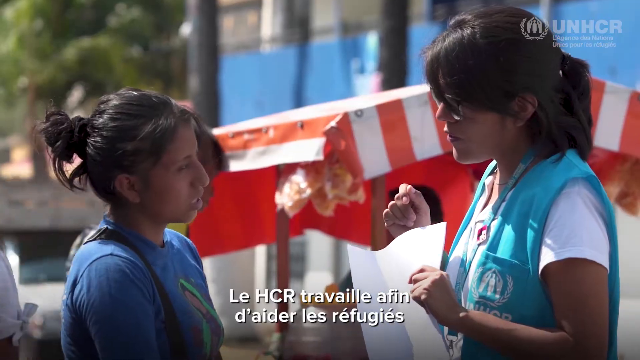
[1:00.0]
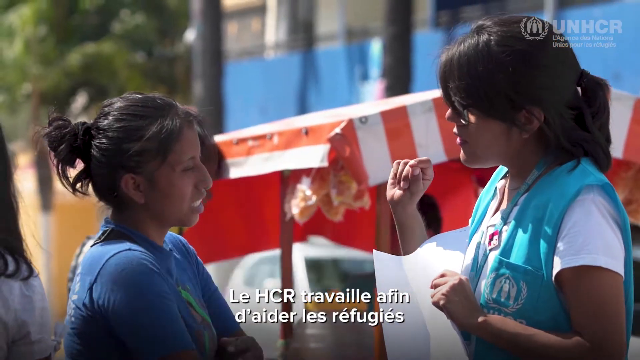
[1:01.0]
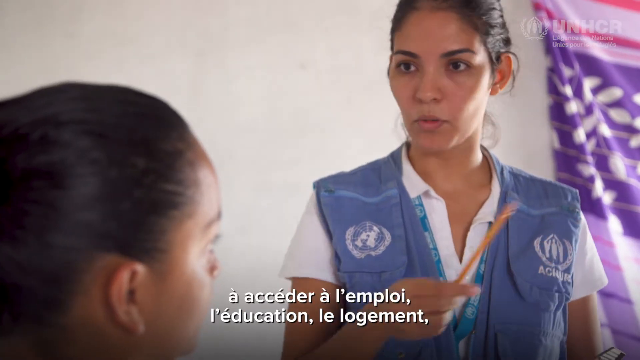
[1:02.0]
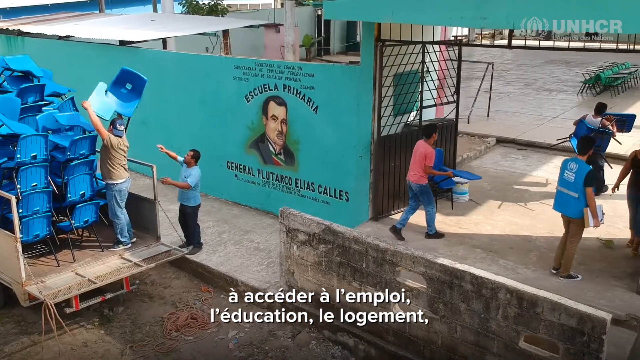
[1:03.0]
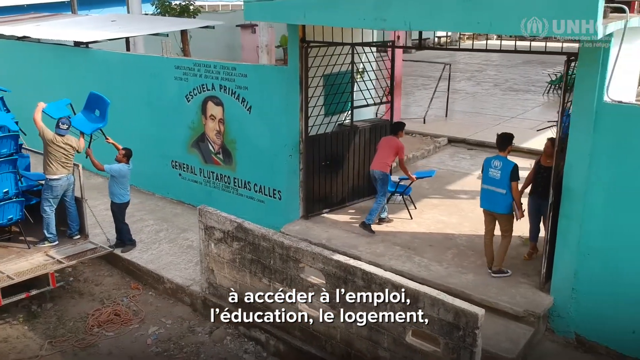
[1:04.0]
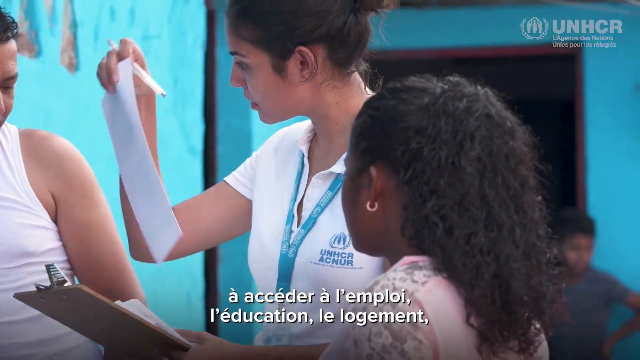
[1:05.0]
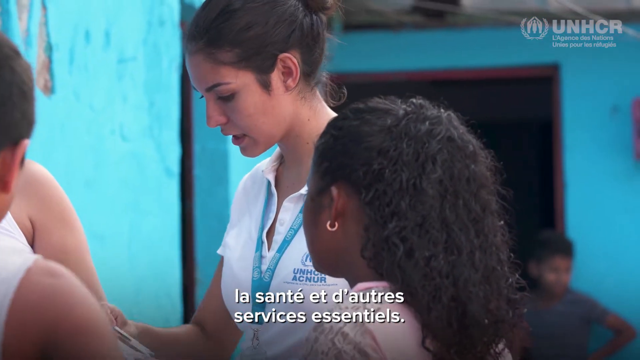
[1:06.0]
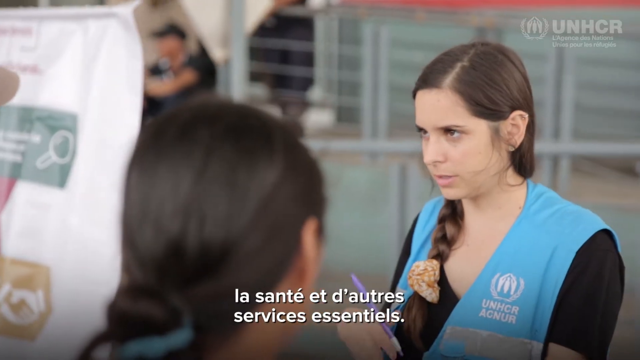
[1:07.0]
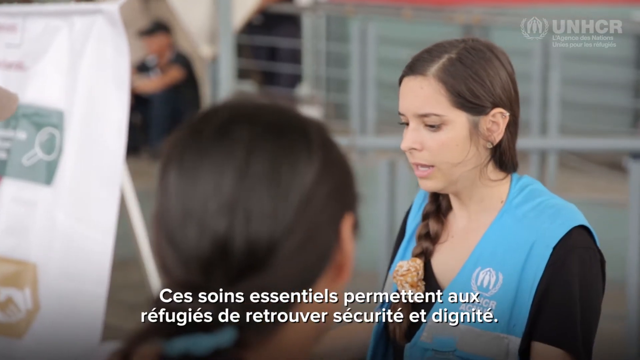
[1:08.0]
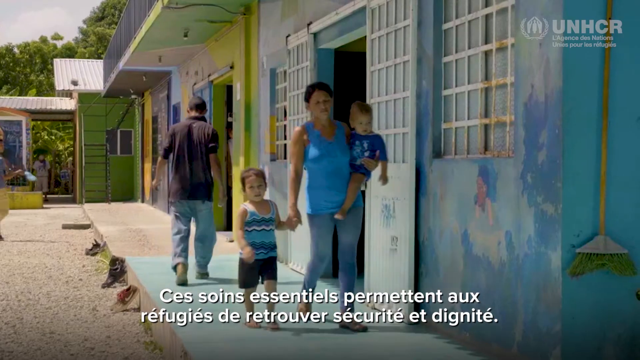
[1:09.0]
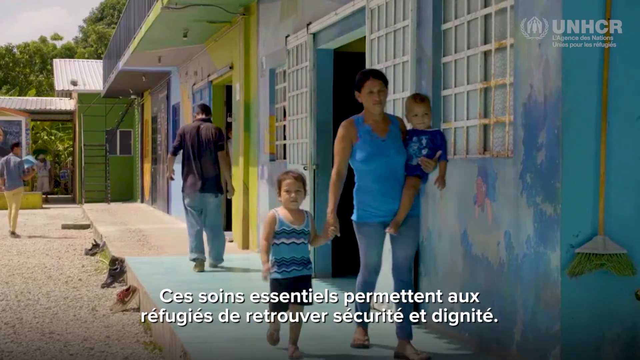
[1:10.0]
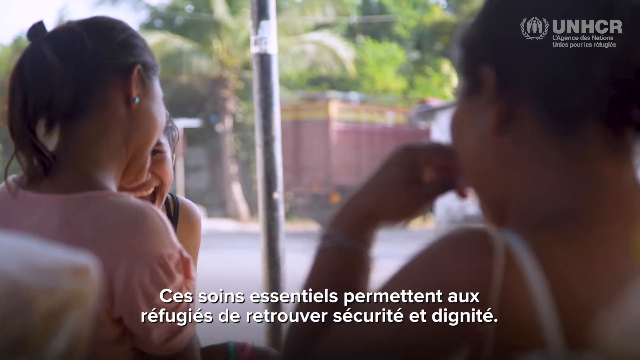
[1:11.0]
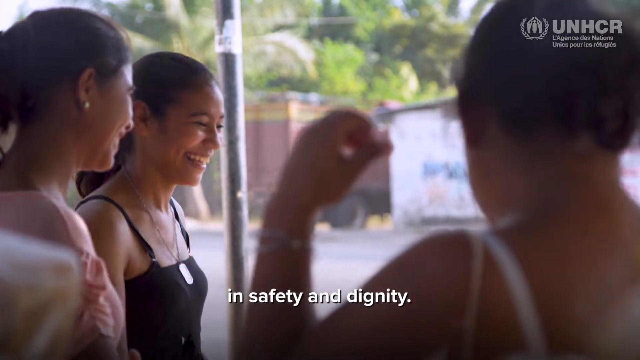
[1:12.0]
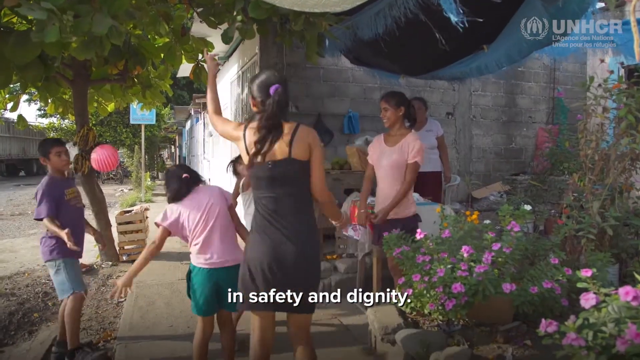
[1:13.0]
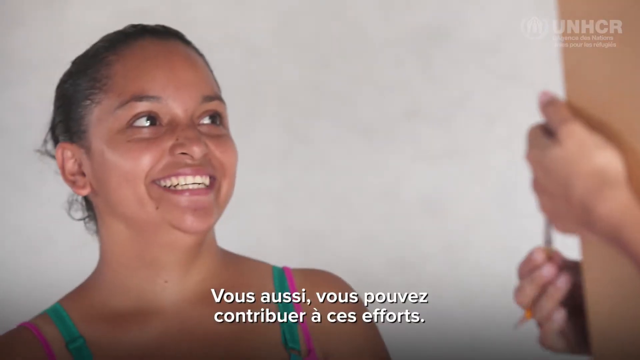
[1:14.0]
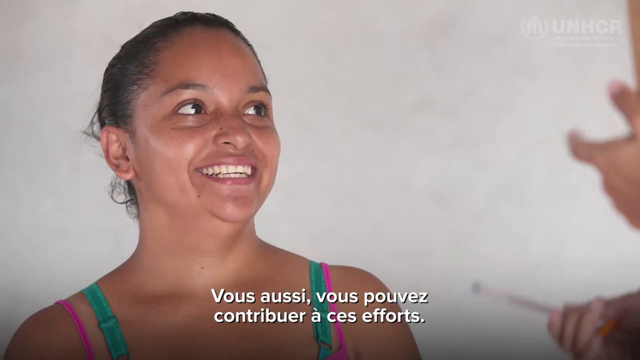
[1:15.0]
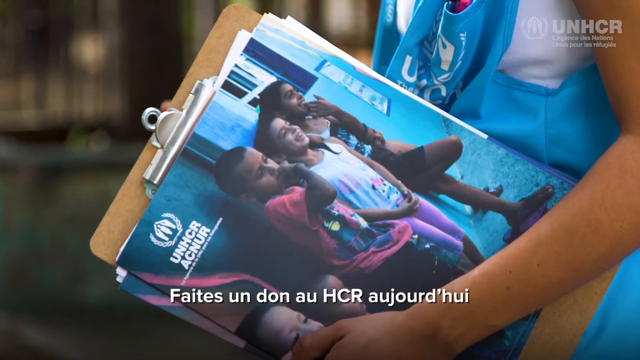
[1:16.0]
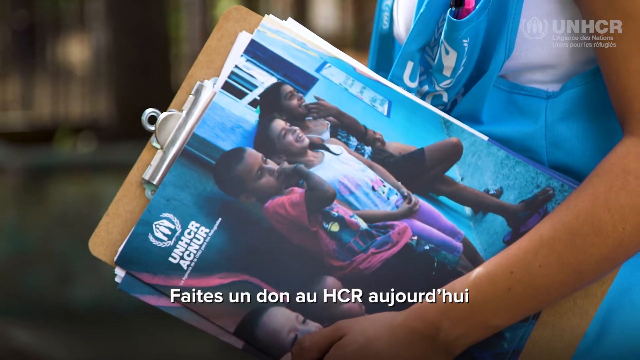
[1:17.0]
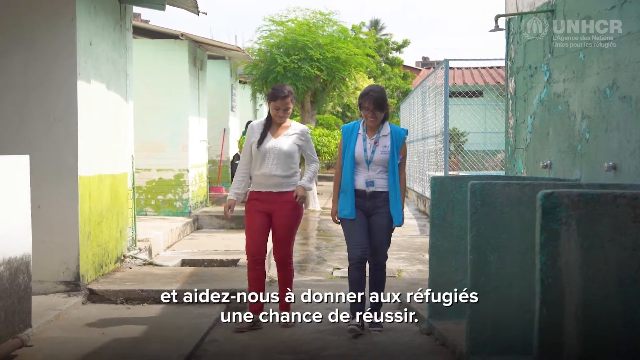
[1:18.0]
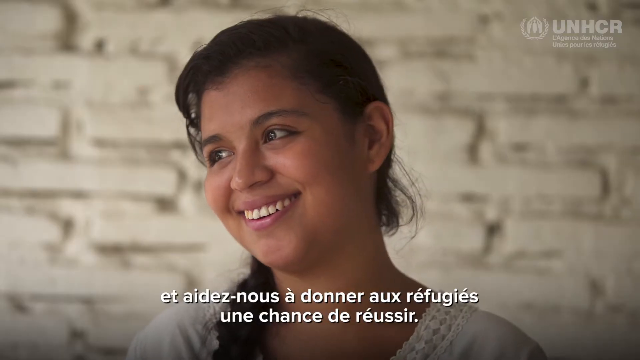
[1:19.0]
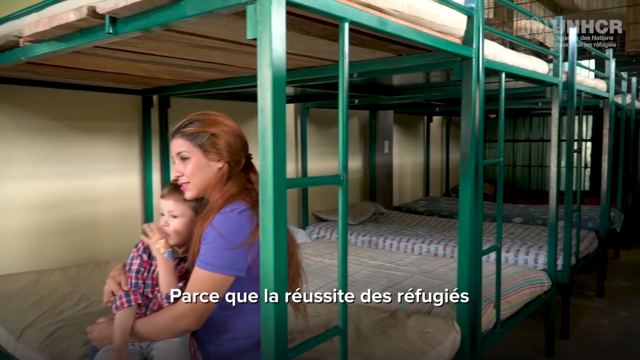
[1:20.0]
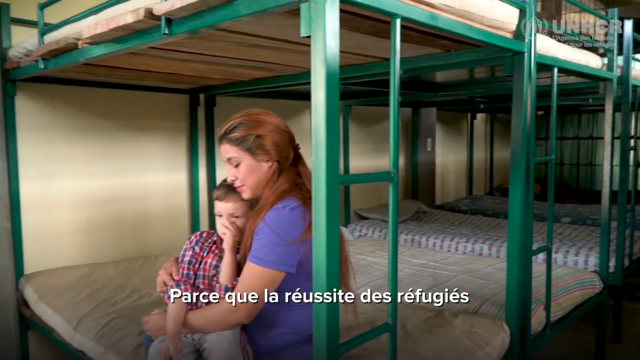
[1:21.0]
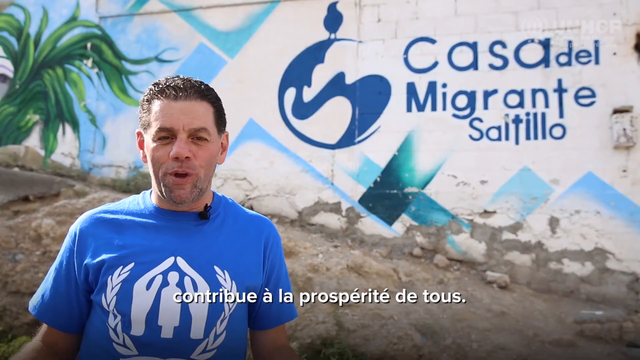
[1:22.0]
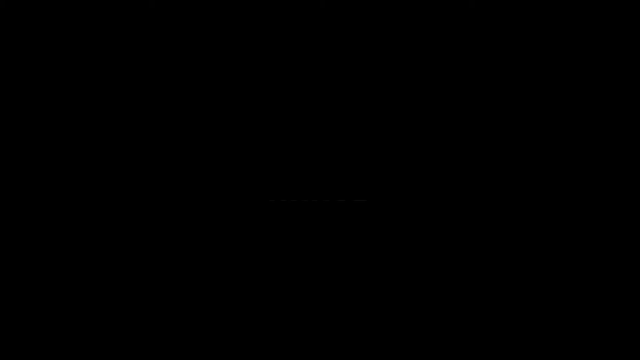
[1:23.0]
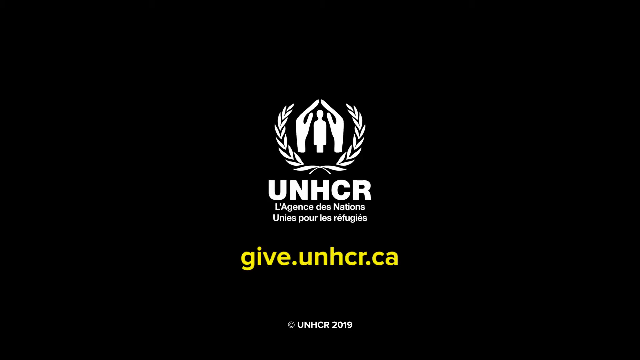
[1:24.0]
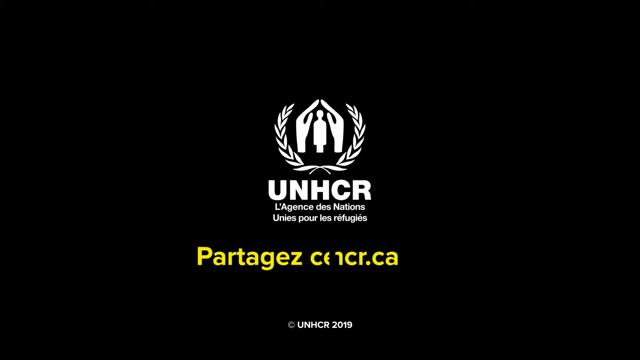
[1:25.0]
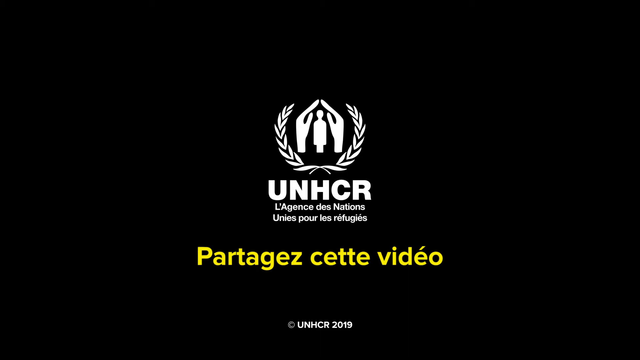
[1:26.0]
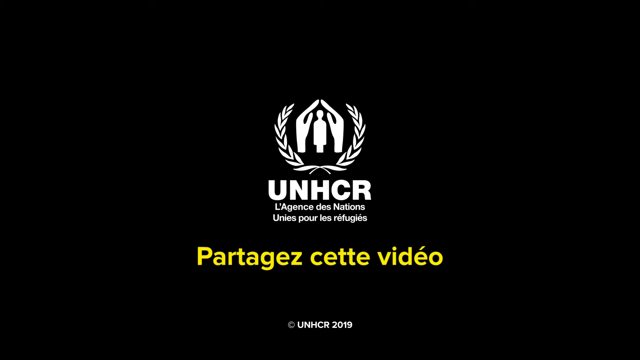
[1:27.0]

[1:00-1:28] A woman talks to people. She is a younger woman, probably in her 20s, with black hair tied back, a light blue vest over a white undershirt, and what appears to be some type of lanyard around her neck. She looks to be holding a pencil in her right hand. On the bottom left, a young girl looks up at the apparent teacher. In the background is a white wall, and on the far right is what appears to be a purplish-pink curtain. The scene switches to a bunch of people taking blue chairs off a large truck and sort of carrying them into what is apparently the area to the right; there are about six people in total, it seems. The scene sort of zooms to the right, then switches to a close-up of the woman from the beginning talking to the men. She no longer has her vest and wears only a white shirt, with blue walls in the background. Another woman wearing a light blue vest talks to people. The scene switches to a mother holding a child in her left arm and walking with another child by her right hand. Next is a close-up of three girls smiling, then a bunch of kids playing with a ball, then a family smiling. Toward the end, the word "UNHCR" appears in the middle with a logo above it.